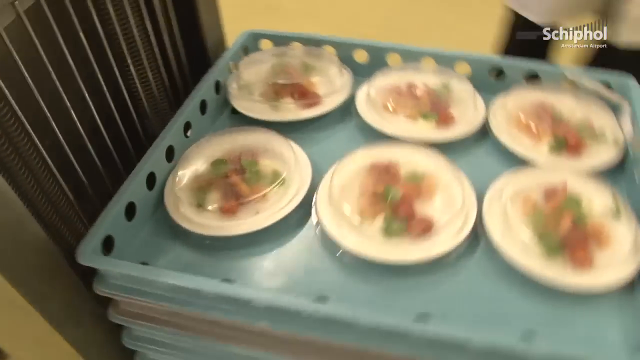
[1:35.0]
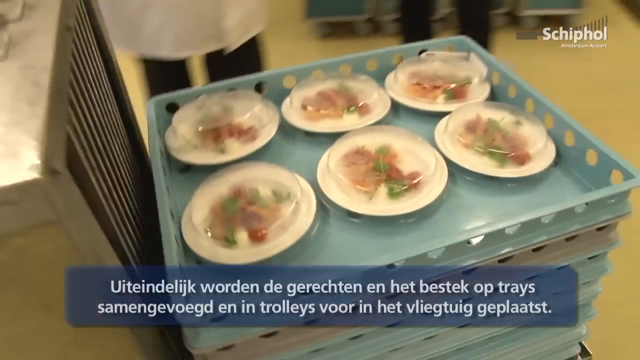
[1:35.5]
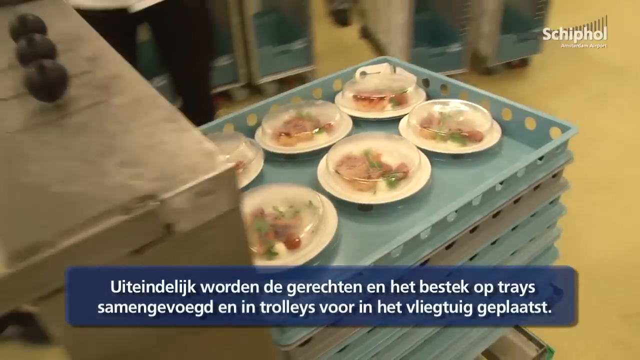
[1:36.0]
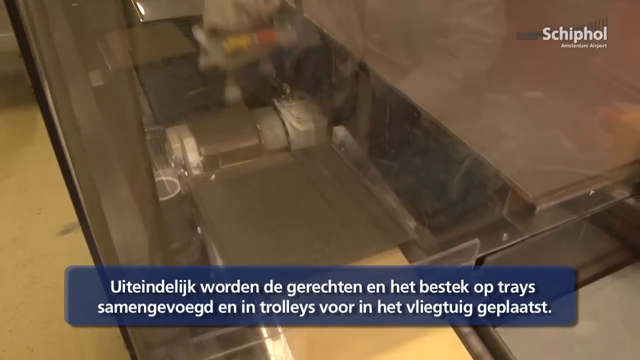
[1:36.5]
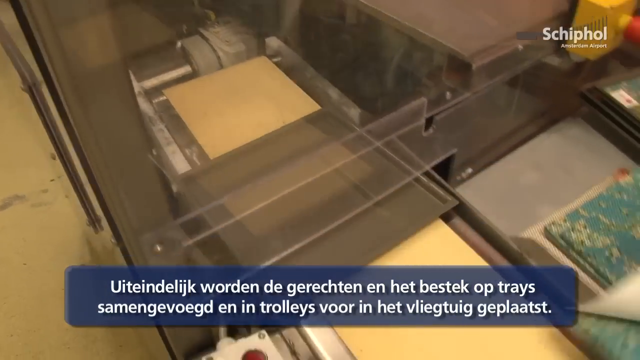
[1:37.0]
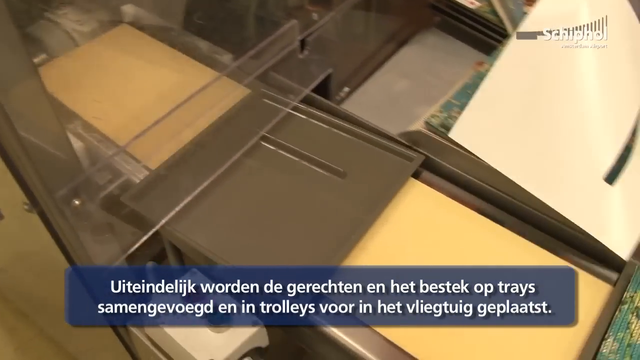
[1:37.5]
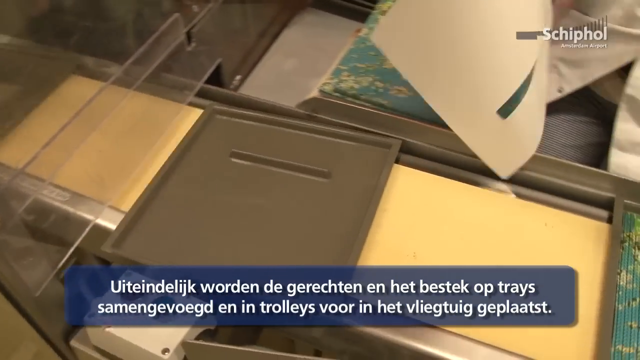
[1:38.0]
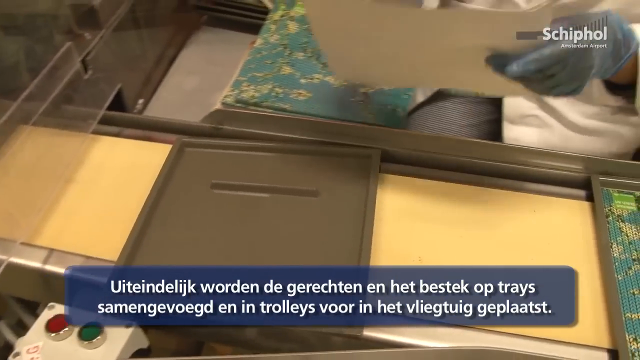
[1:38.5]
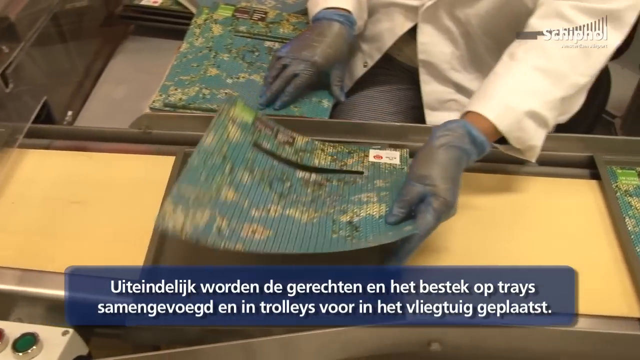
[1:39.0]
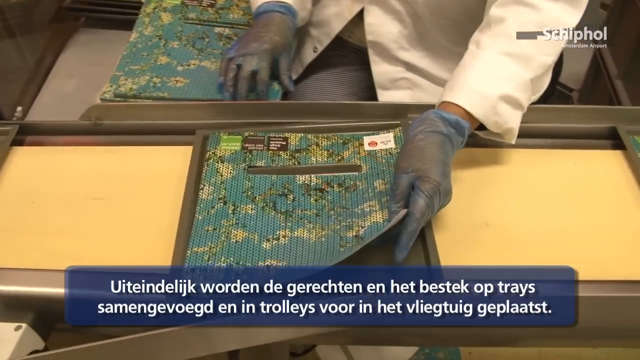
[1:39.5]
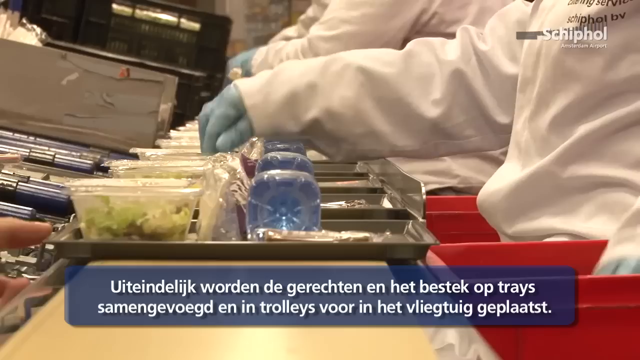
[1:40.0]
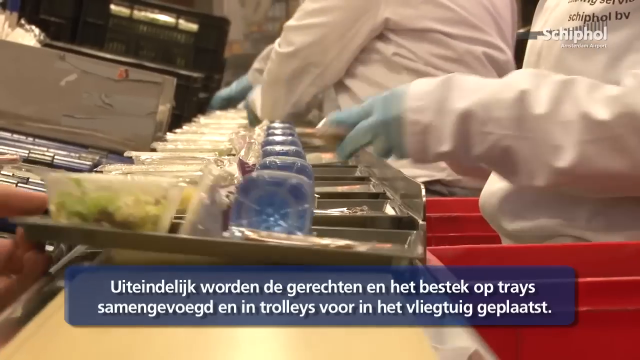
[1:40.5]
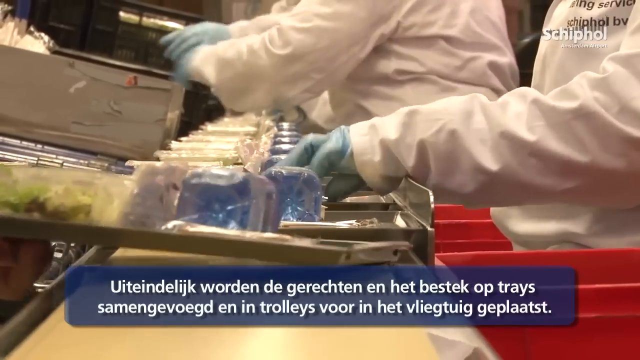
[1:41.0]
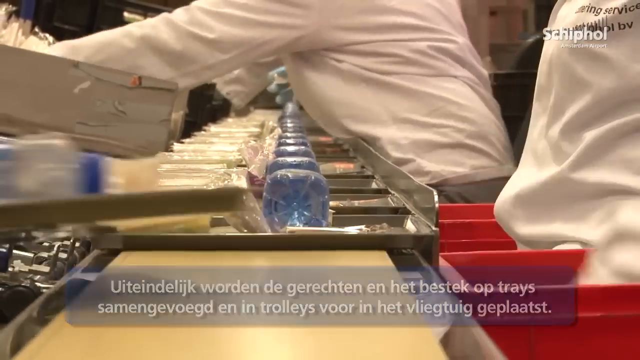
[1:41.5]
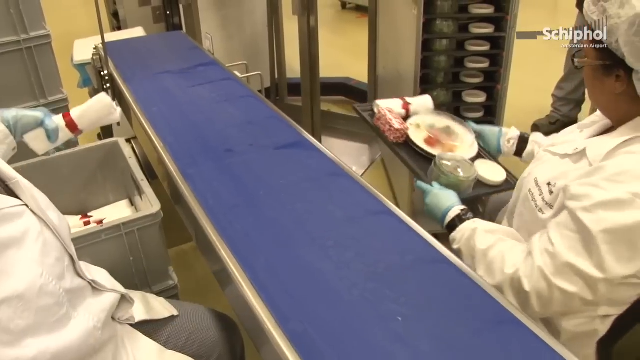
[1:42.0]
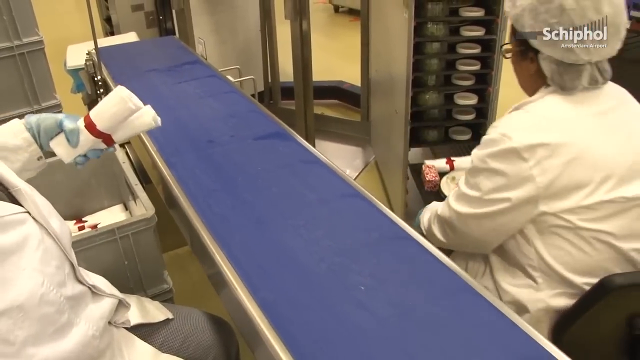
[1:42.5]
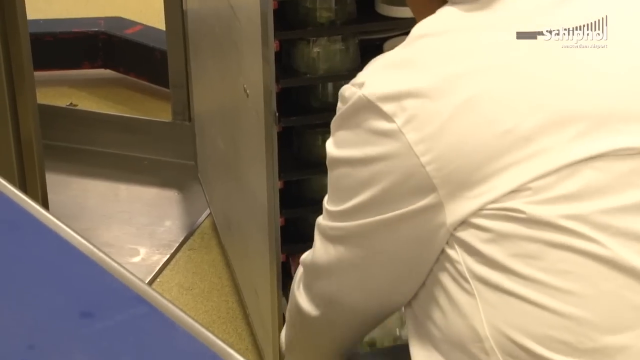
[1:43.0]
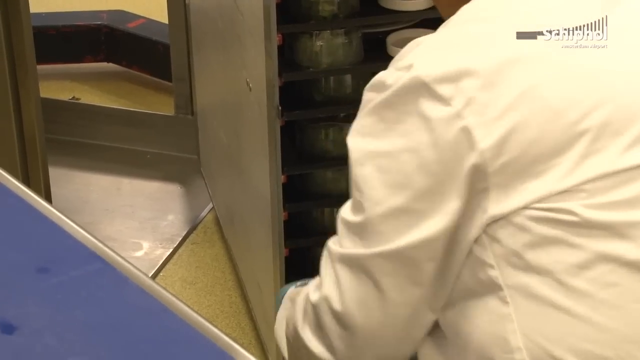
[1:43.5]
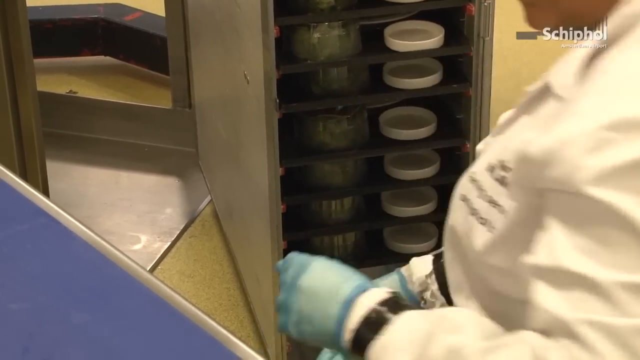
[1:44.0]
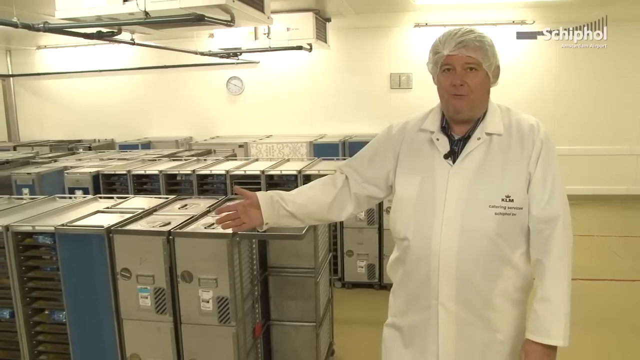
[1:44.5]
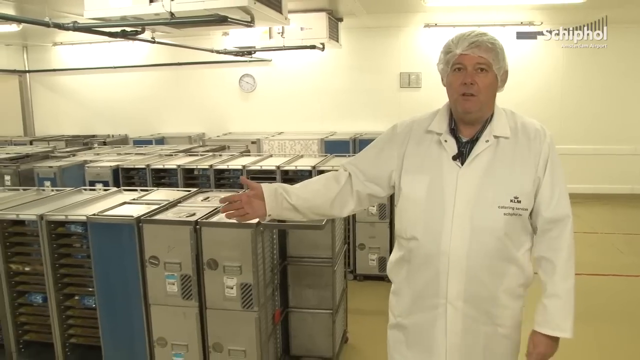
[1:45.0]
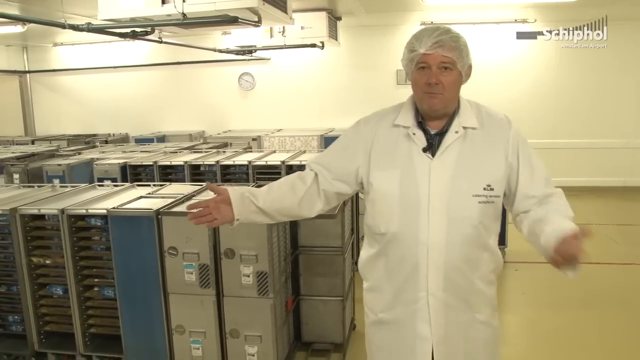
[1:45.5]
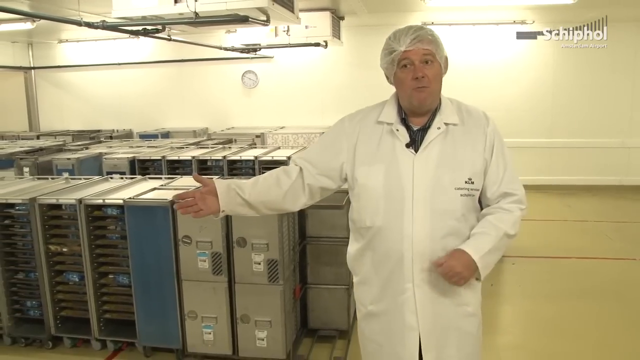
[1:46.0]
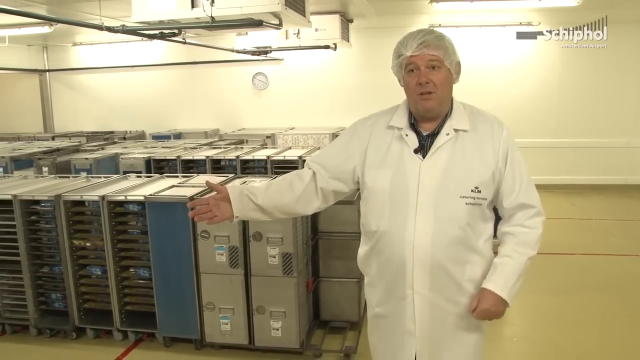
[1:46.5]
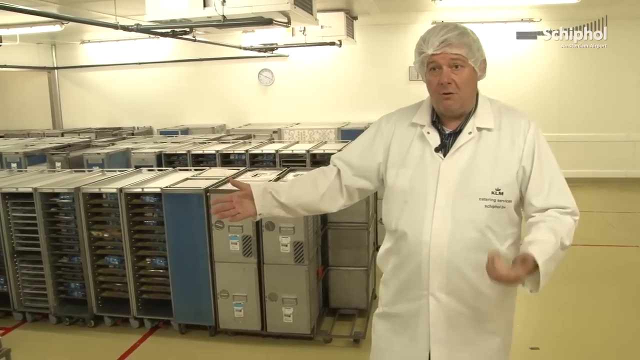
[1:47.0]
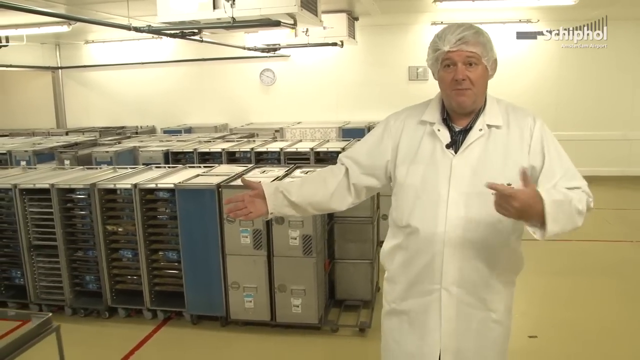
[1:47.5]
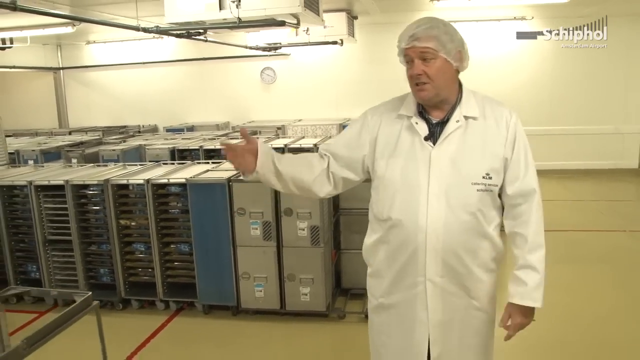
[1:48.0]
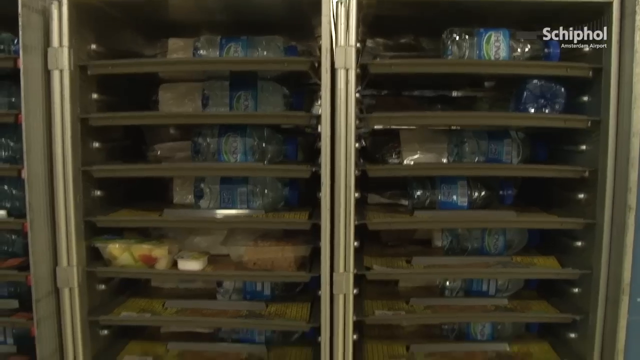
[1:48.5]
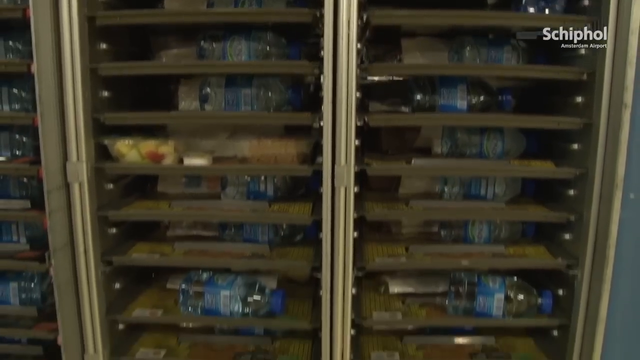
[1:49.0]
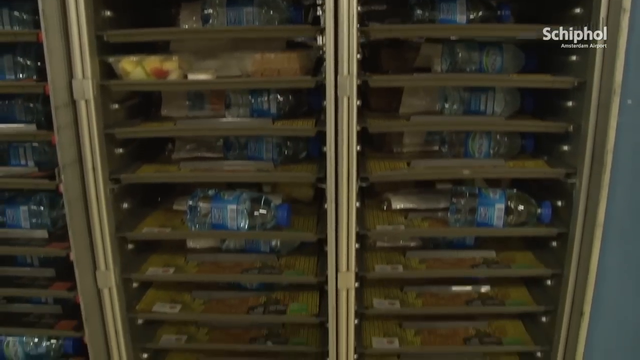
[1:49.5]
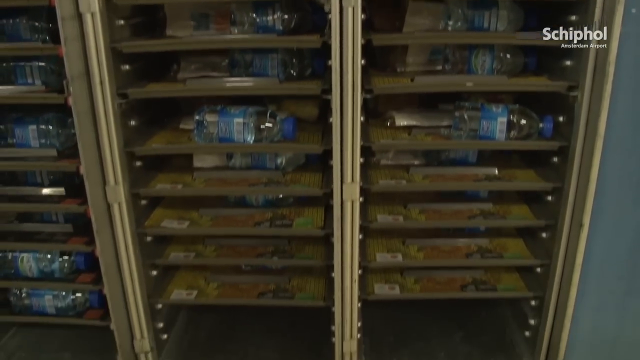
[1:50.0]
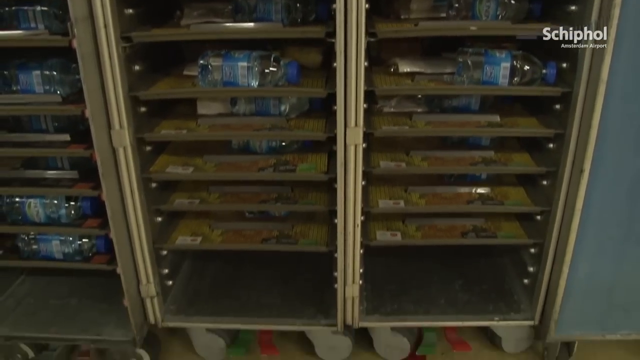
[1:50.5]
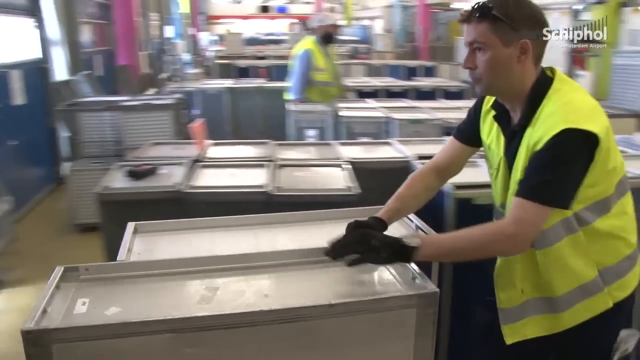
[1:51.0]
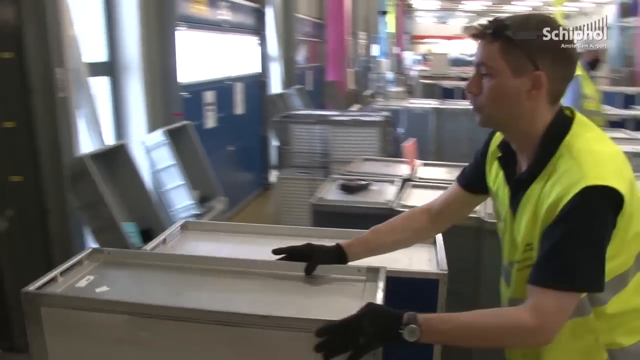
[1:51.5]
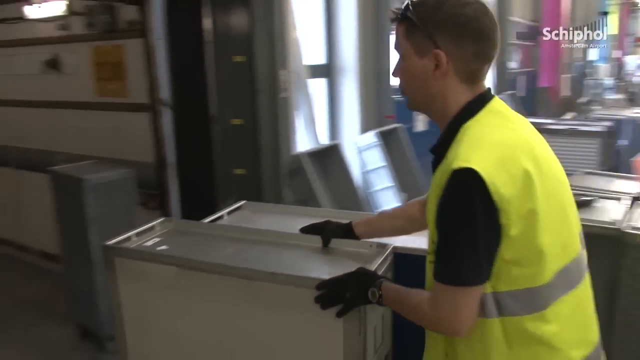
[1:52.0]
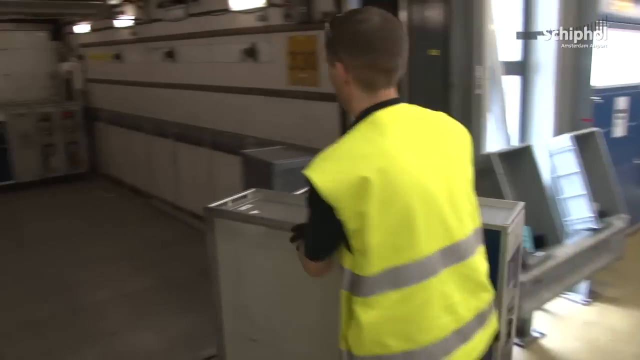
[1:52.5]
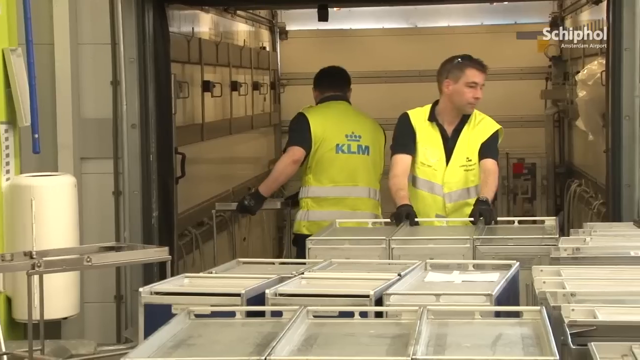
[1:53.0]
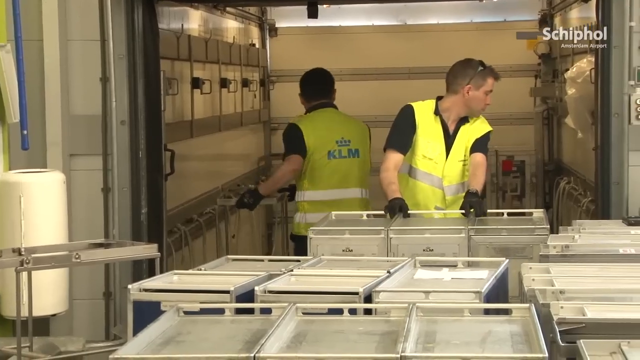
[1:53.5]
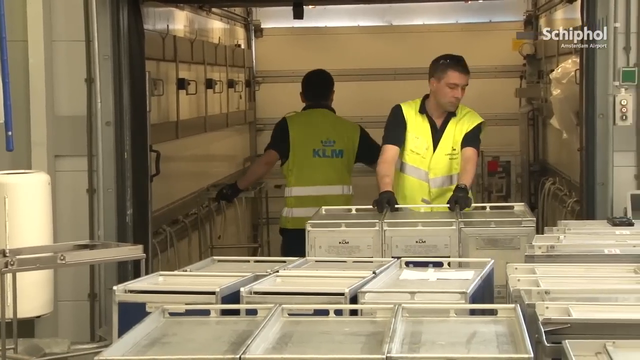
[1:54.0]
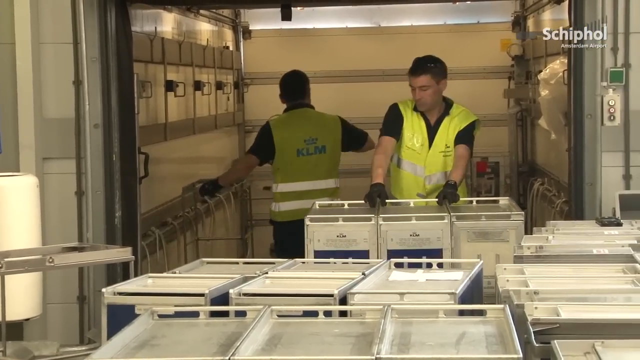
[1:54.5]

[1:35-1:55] An assembly line prepares the food for the flight. A machine pushes out a tray, and people put a paper placemat on it. The chefs wear gloves, white coats and headwear. They assemble the meals, putting dishes and a roll with silverware on the plates, then moving the plates with the meals into aluminum slotted containers. The chef walks by a room with rows of these containers and gestures to them. The inside of a container shows a stack of the trays. Two men in white and yellow reflective vests and gloves push these trays into the back of a large truck.